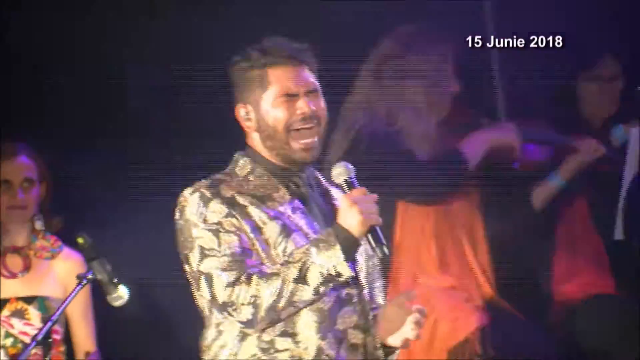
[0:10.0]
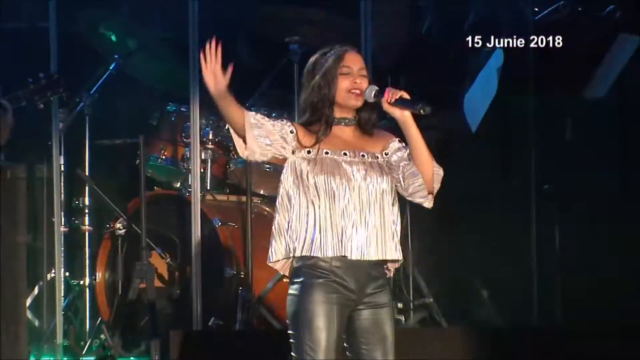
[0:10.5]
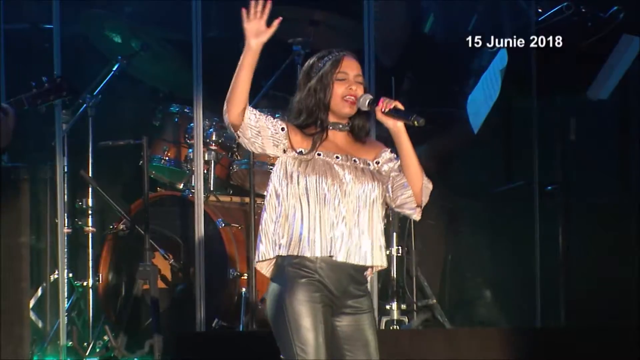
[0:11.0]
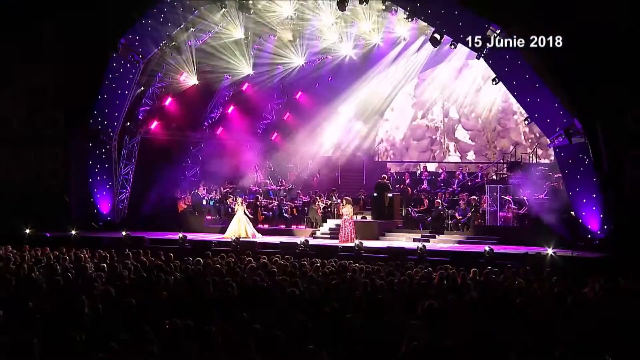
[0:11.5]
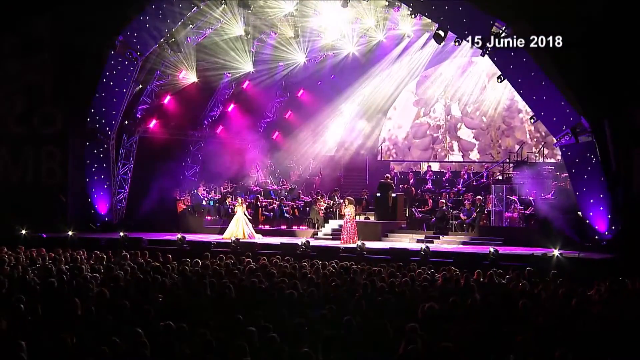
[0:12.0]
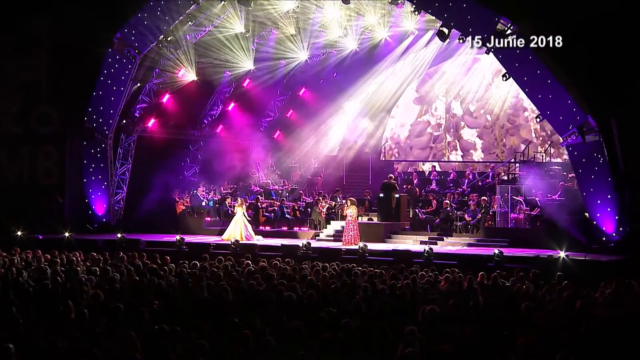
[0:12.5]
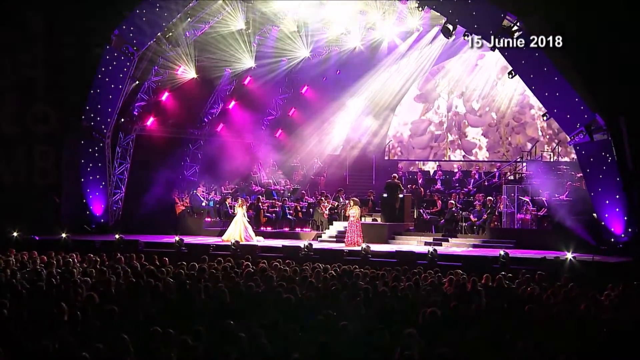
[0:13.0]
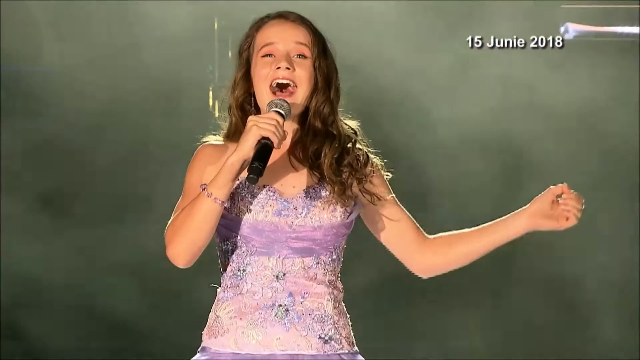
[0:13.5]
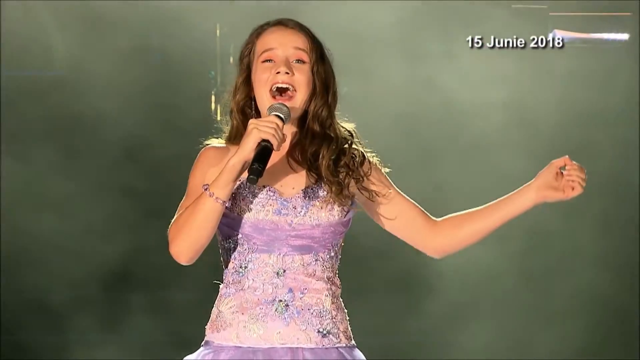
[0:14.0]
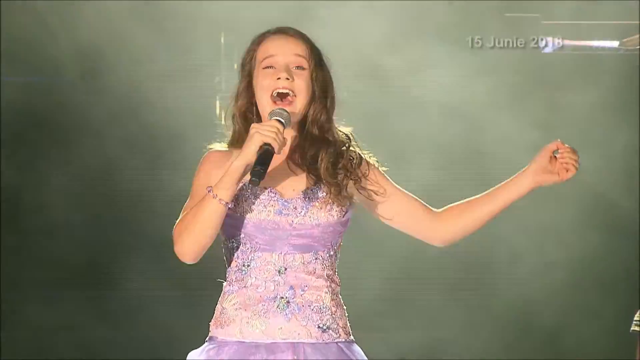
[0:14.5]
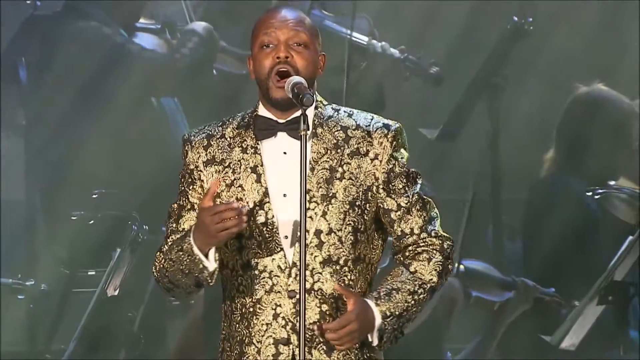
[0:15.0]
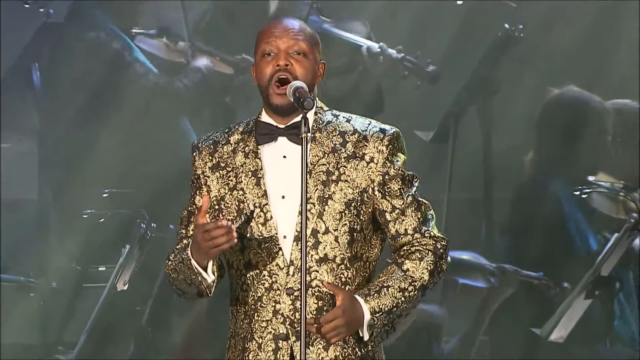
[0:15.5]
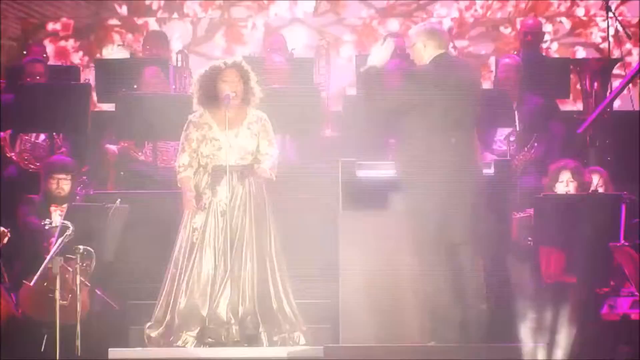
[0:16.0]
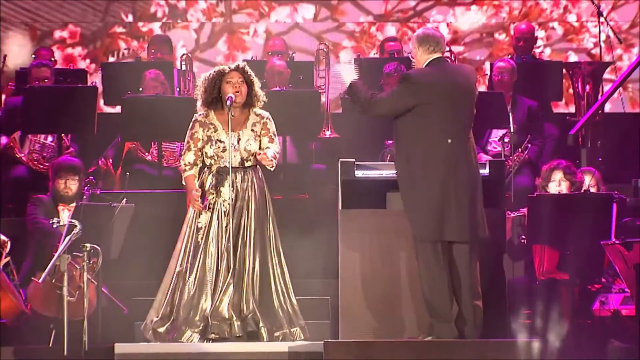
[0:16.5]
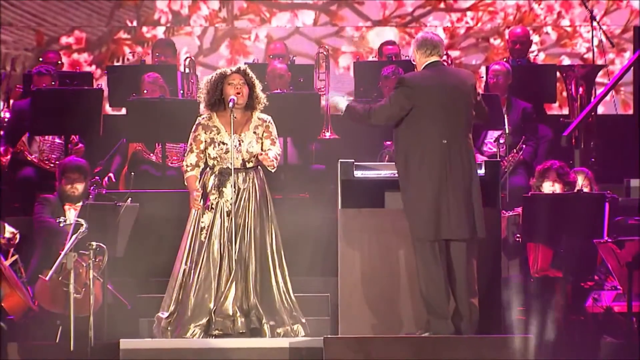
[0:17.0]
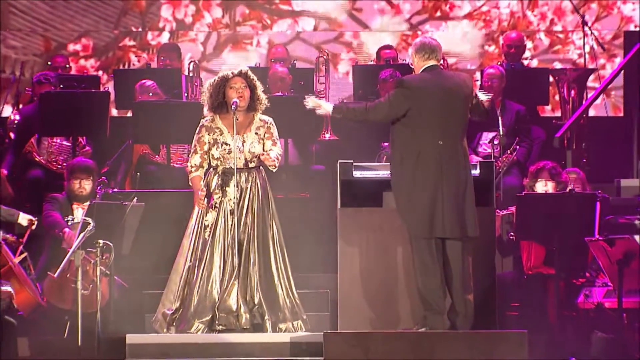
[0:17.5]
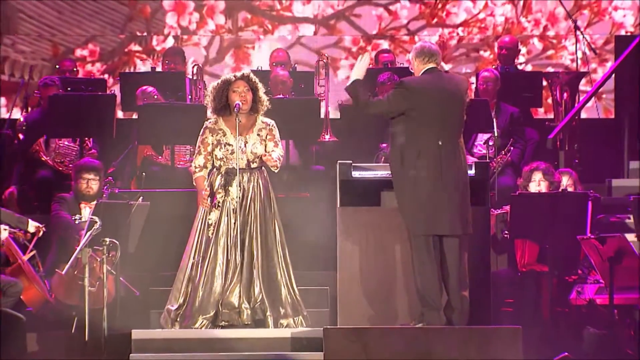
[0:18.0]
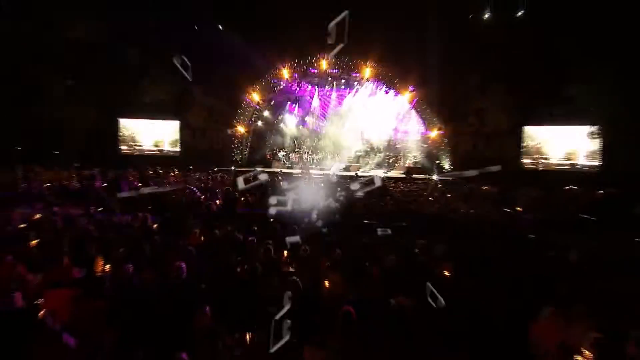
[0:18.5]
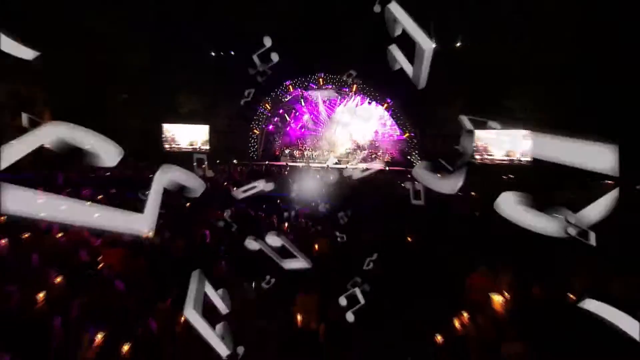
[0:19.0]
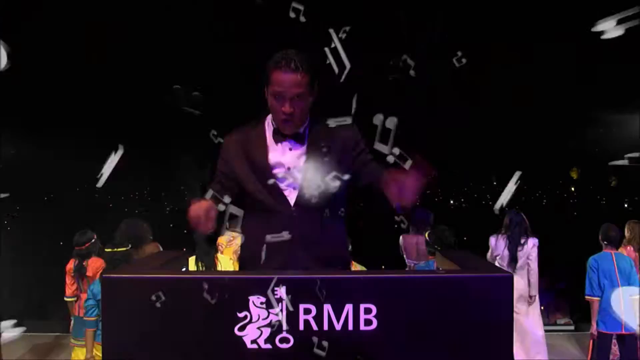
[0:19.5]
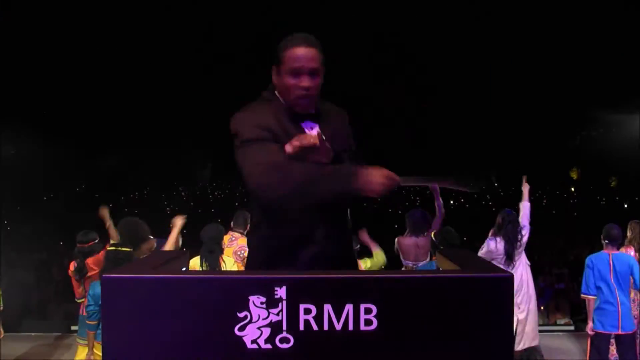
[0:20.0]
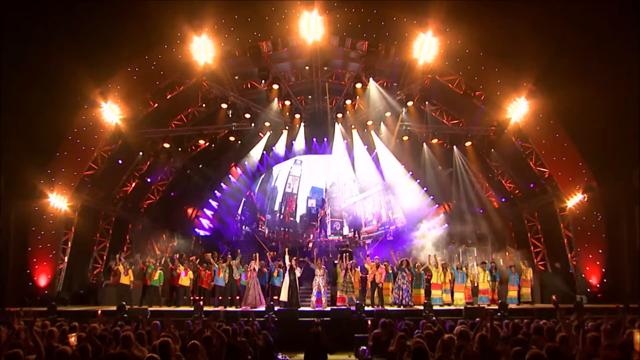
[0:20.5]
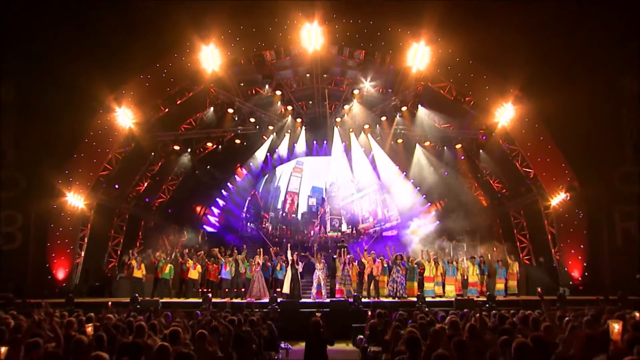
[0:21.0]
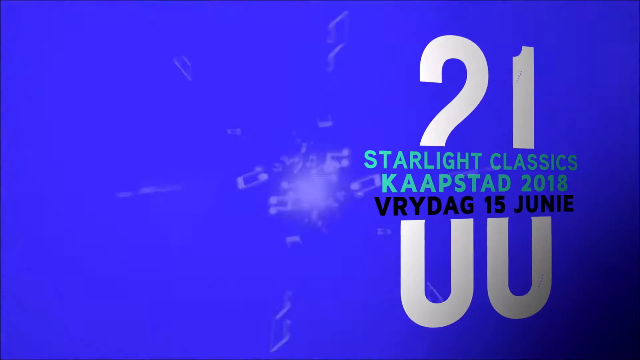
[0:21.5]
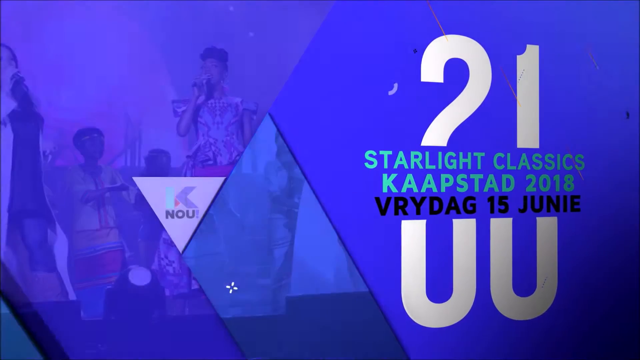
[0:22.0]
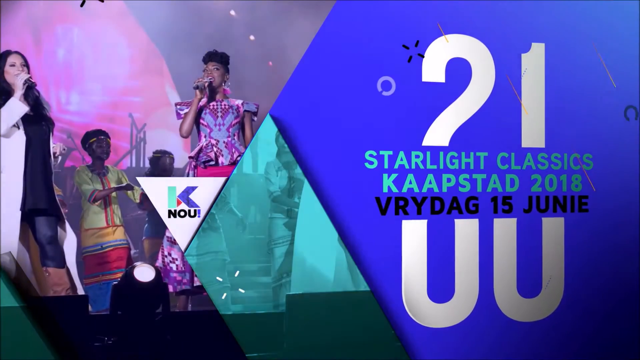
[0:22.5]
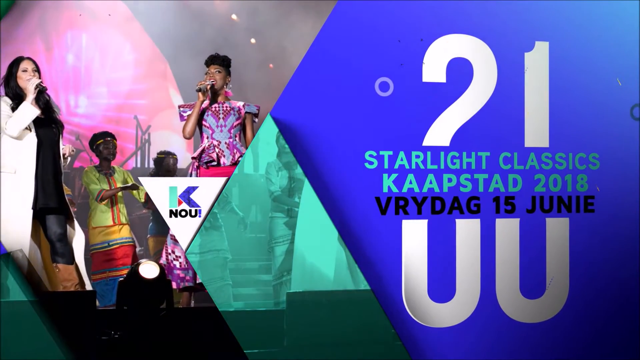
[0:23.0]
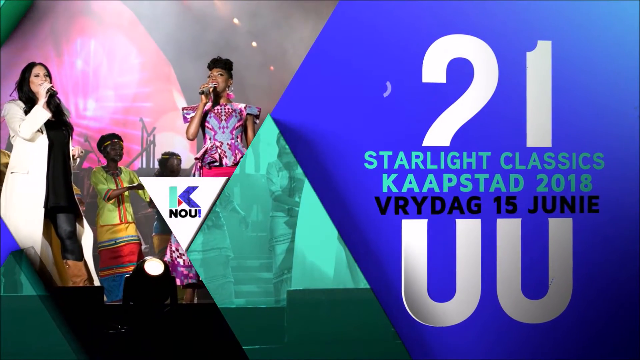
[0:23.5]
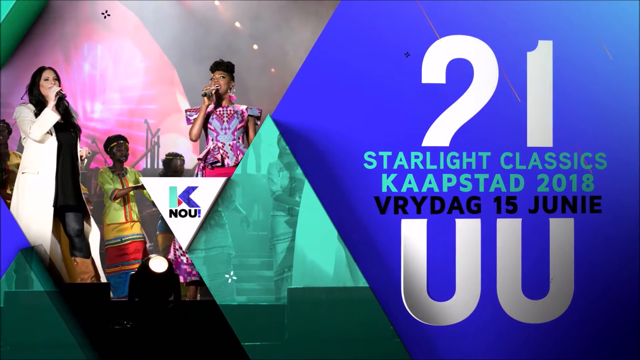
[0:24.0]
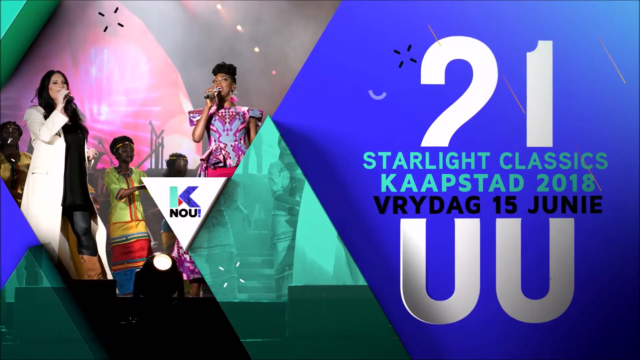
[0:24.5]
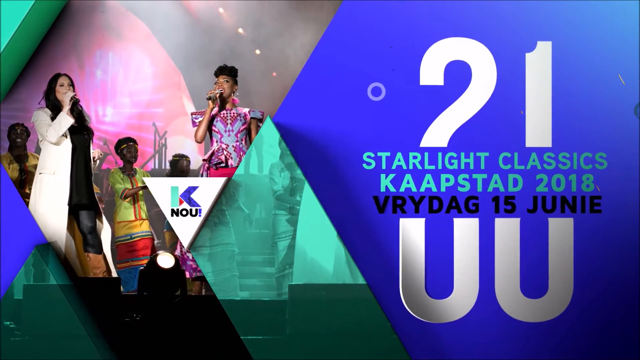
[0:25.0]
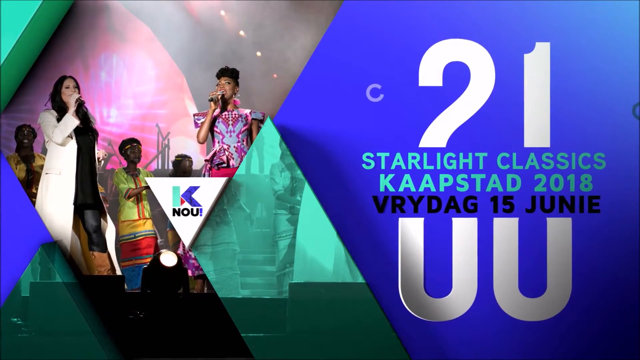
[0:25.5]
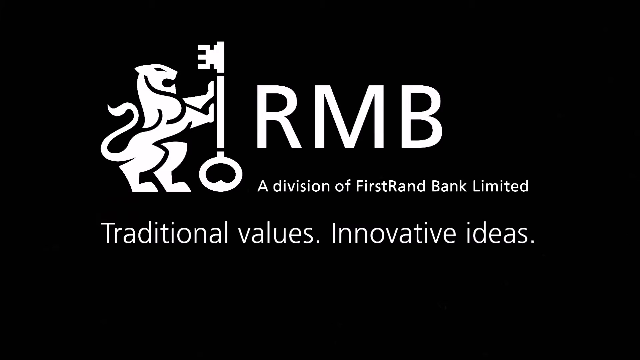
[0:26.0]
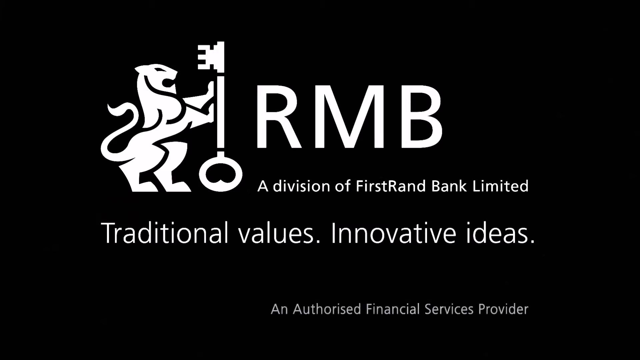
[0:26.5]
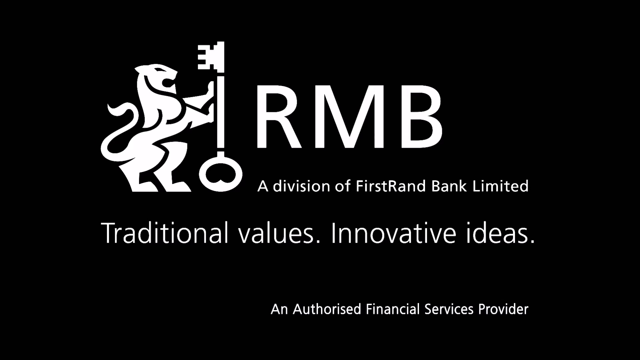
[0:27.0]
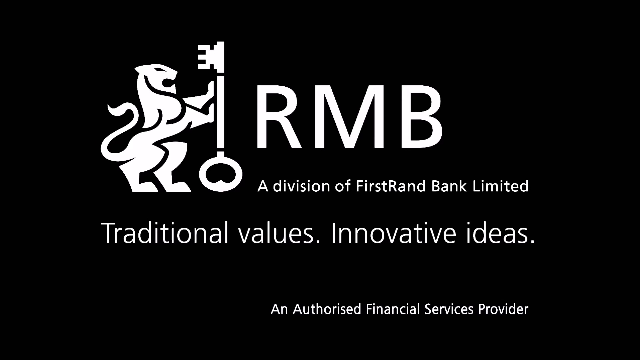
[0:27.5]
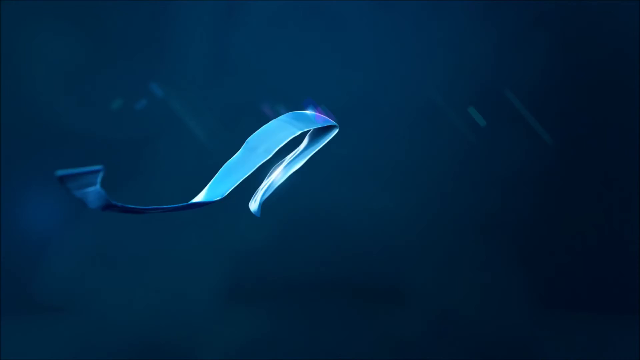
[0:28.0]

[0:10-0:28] The shot of the male singer in the silver suit continues before a bright light dissolves to a black female singer facing right, wearing a shiny silver top and black leather trousers and holding her right hand above her head. A cut shows the stage from the audience, to the right of the stage, bathed in purples, with a woman in a large dress standing in the middle of the stage. A close-up shows, from the waist up, a young girl with long brown hair standing and holding a microphone, with her left hand out to her side. A flash of white dissolves to a black man in a black bow tie and a yellow metallic dinner jacket. Another shot shows a black female singer behind a microphone with the conductor facing her on the right. A white flash of light dissolves back to the original shot of the stage from back on the right as musical notes fly towards the camera. A black male conductor is shown, followed by a shot of the stage from the audience. The screen then turns blue, and text rotating towards the camera on the right says "Starlight Classics Kaapstad 2018, Vryrdag 15 Junie". White numbers above it appear to be 2 and 1, and underneath is "UU". On the left is a montage of graphics of people singing along, with a central logo in an upside-down white triangle reading "K NOU!". The video then cuts to a black screen showing the lion symbol from the conductor's podium, facing right and holding a key. To its right, white writing says "RMB", underneath it "a division of First Rand Bank Limited", underneath that "Traditional Values, Innovative Ideas", and below, writing fades in saying "an authorised financial services provider".